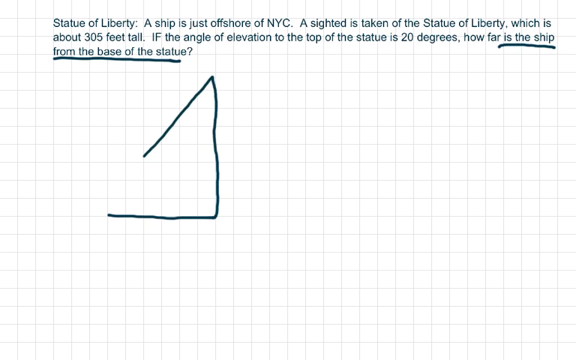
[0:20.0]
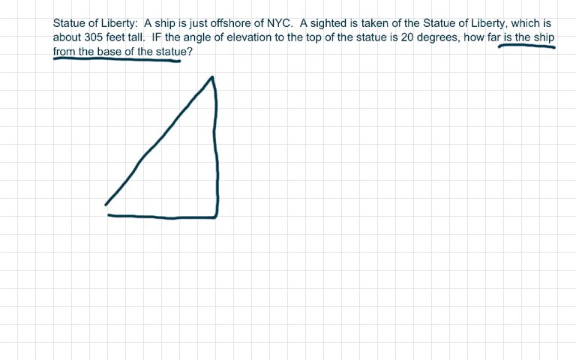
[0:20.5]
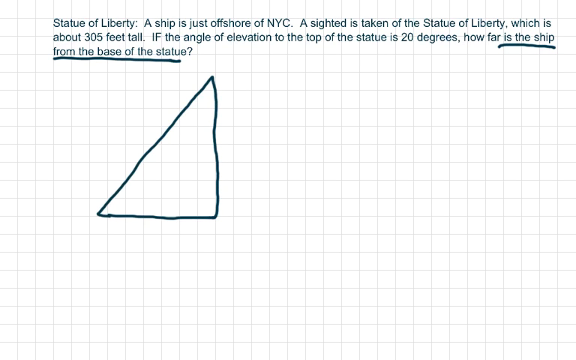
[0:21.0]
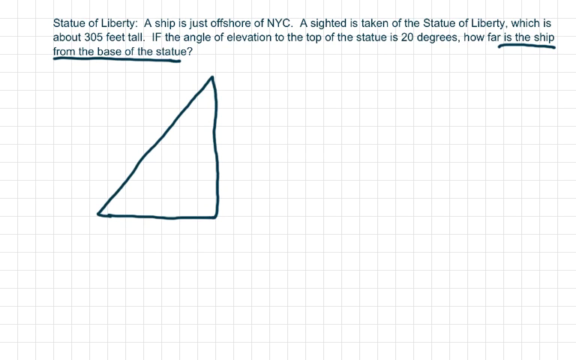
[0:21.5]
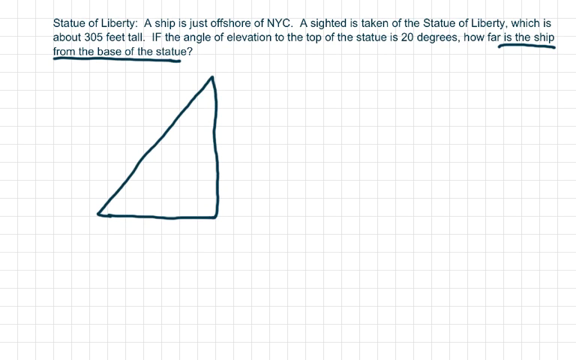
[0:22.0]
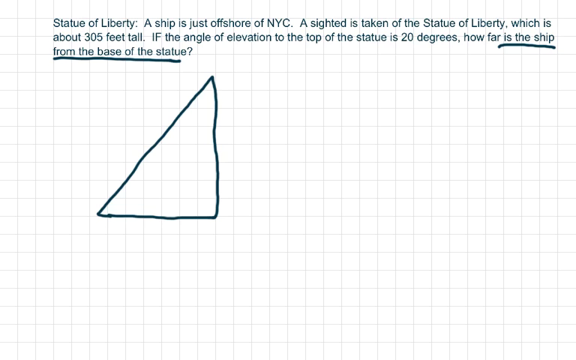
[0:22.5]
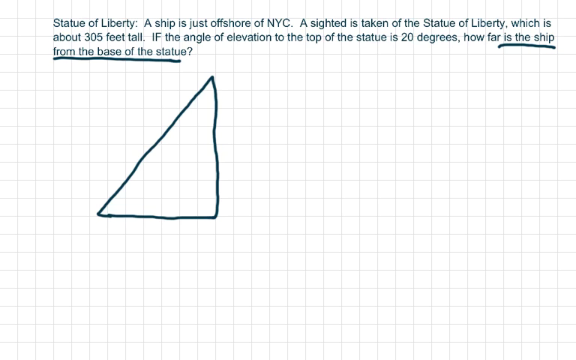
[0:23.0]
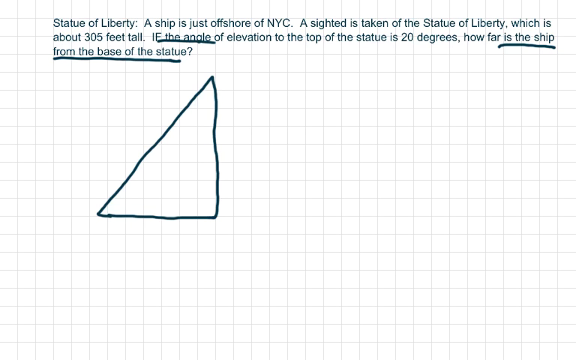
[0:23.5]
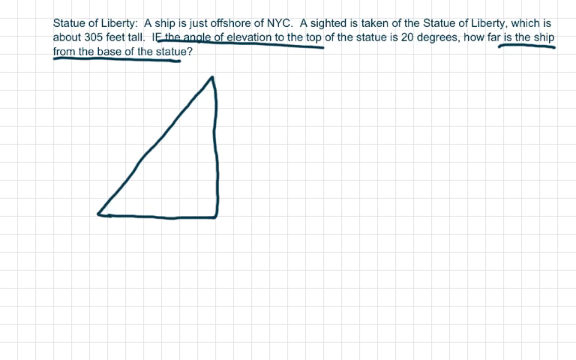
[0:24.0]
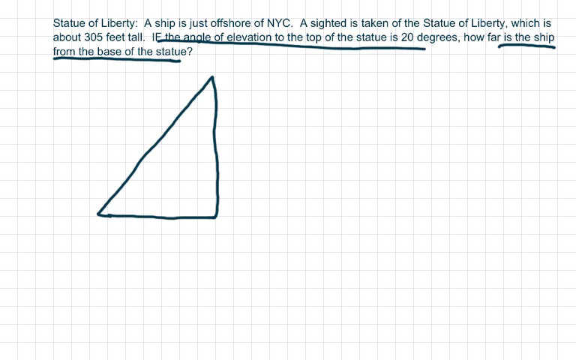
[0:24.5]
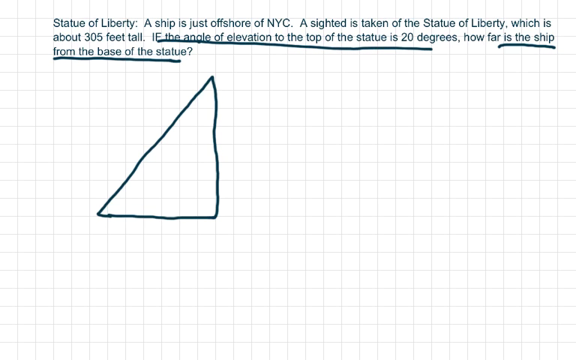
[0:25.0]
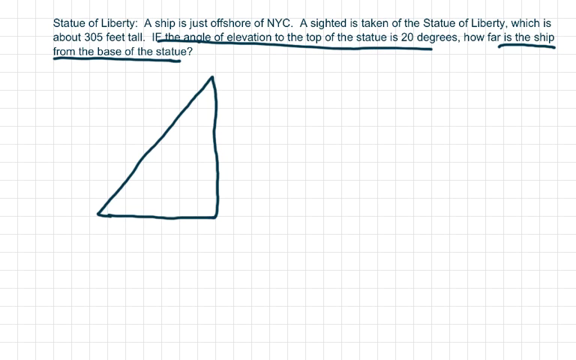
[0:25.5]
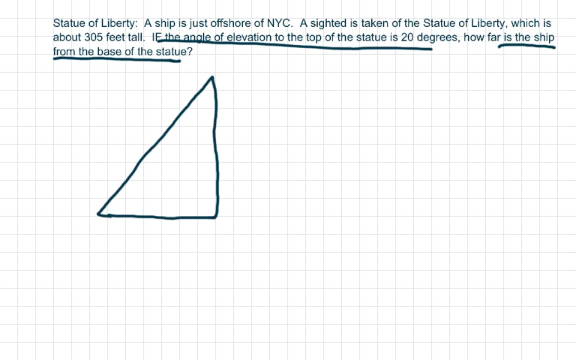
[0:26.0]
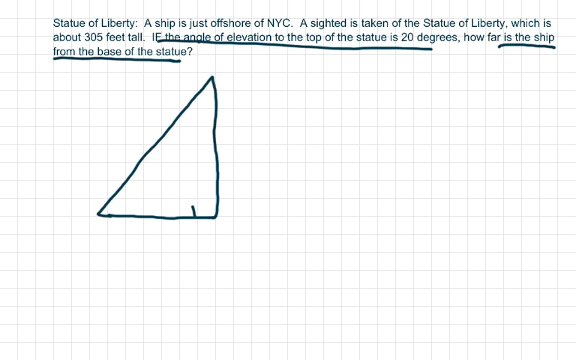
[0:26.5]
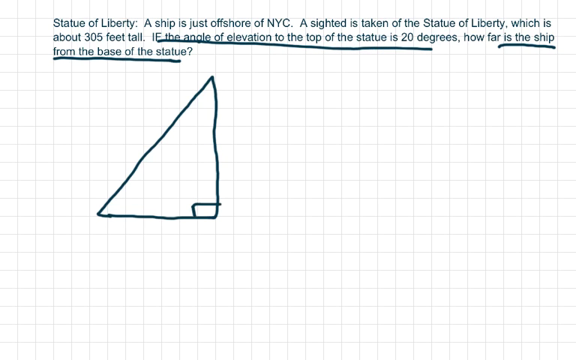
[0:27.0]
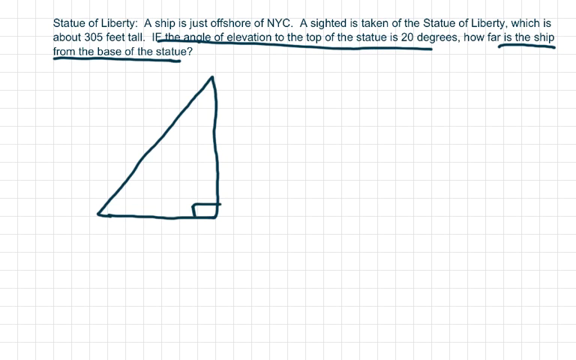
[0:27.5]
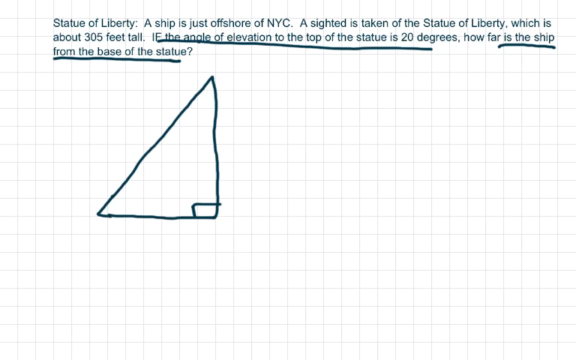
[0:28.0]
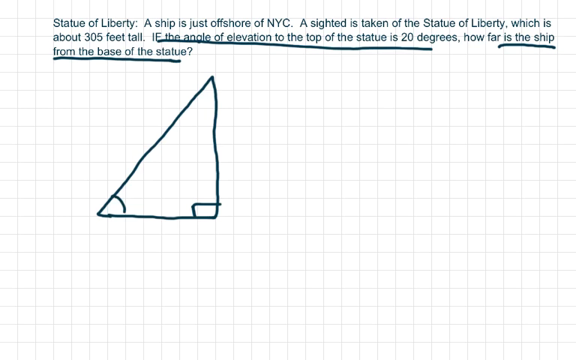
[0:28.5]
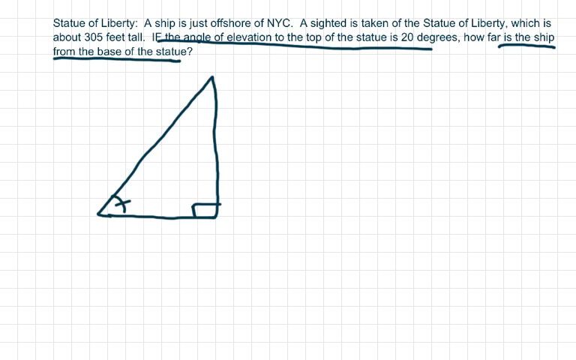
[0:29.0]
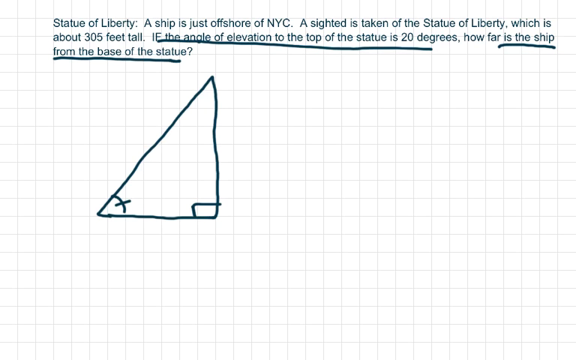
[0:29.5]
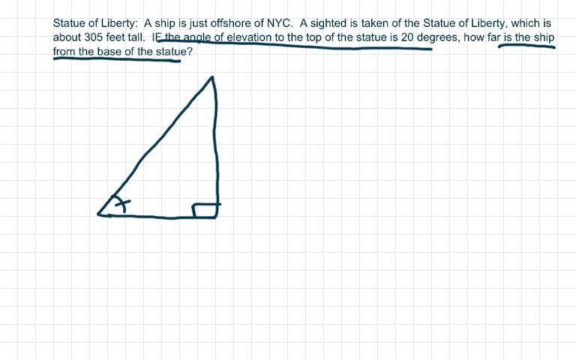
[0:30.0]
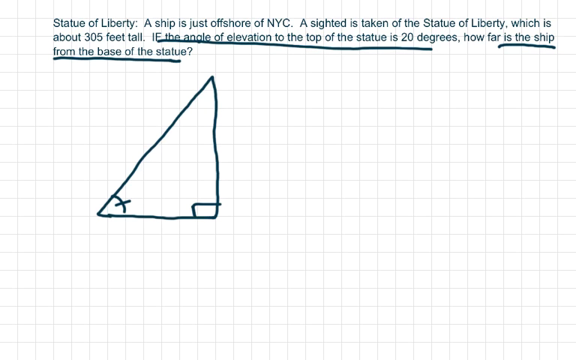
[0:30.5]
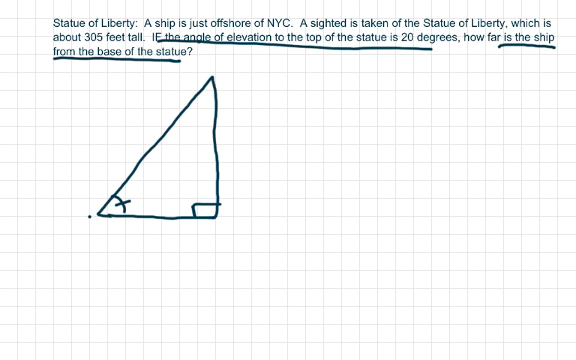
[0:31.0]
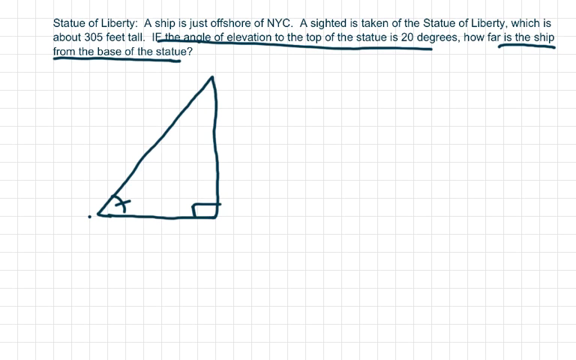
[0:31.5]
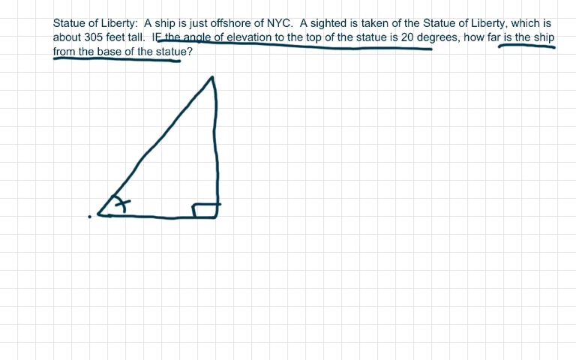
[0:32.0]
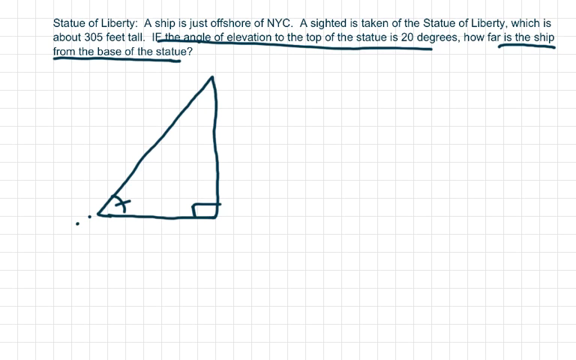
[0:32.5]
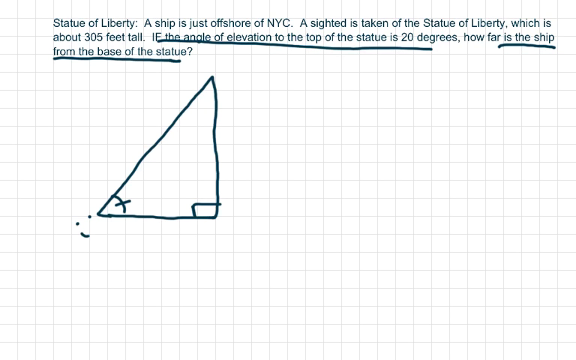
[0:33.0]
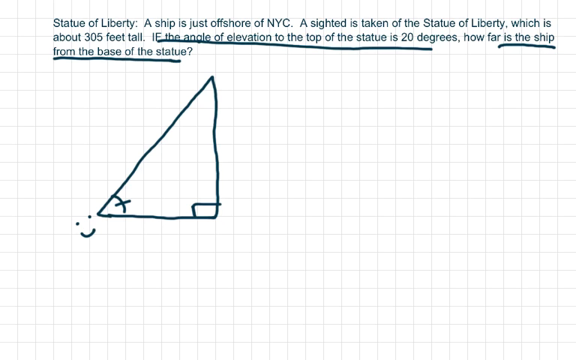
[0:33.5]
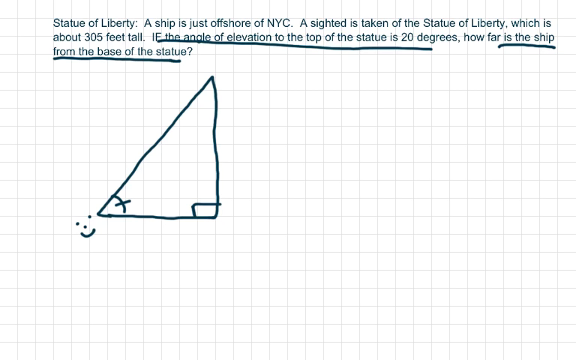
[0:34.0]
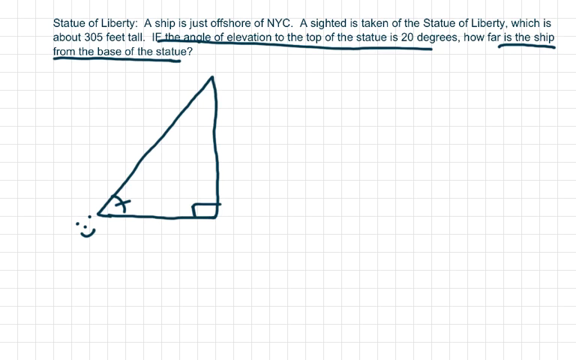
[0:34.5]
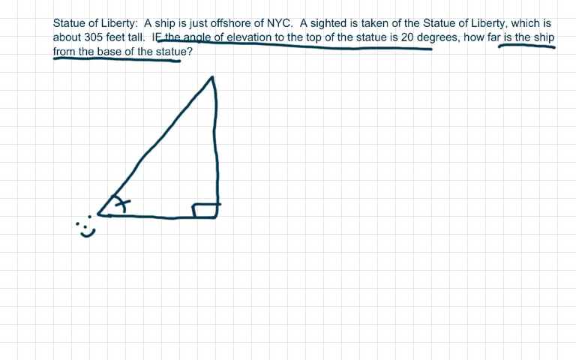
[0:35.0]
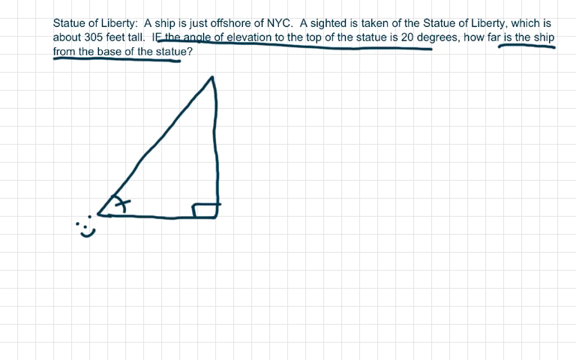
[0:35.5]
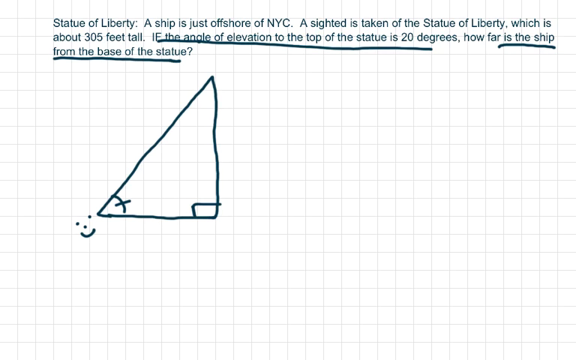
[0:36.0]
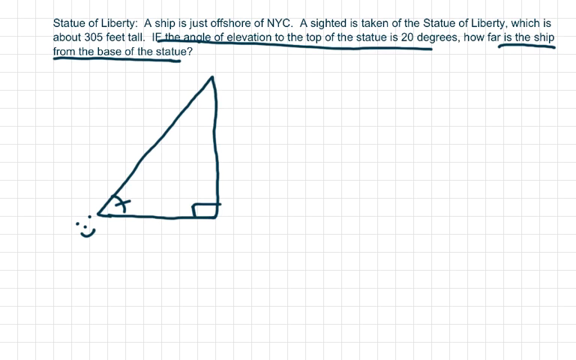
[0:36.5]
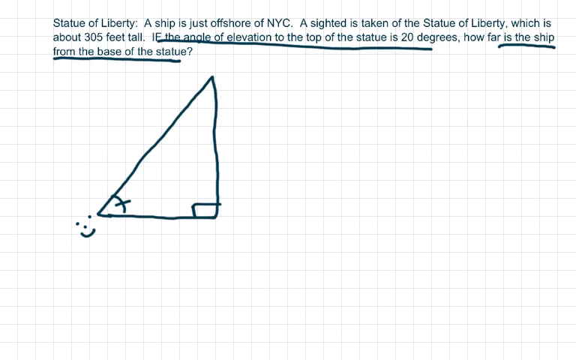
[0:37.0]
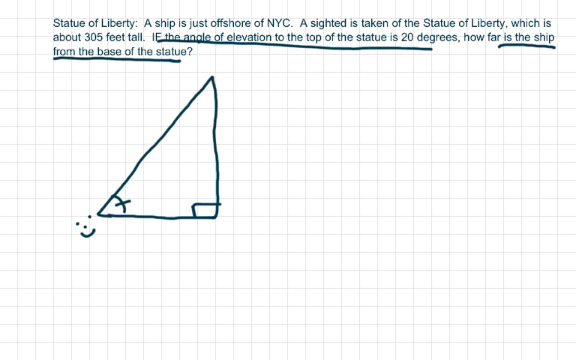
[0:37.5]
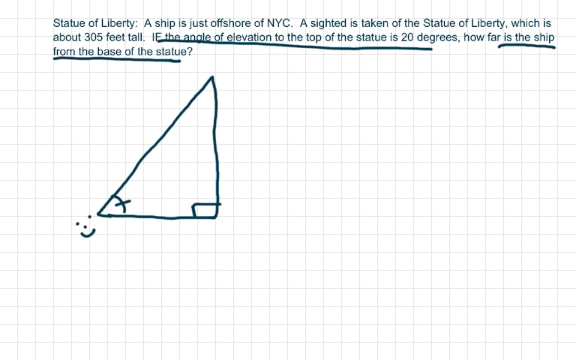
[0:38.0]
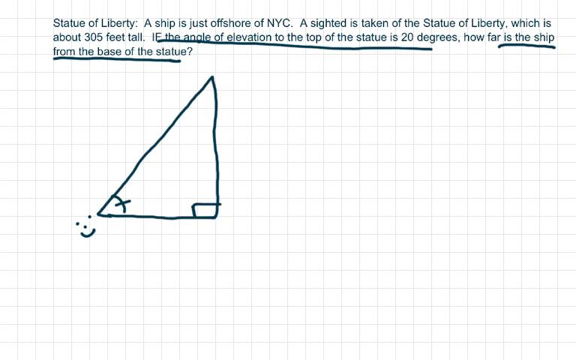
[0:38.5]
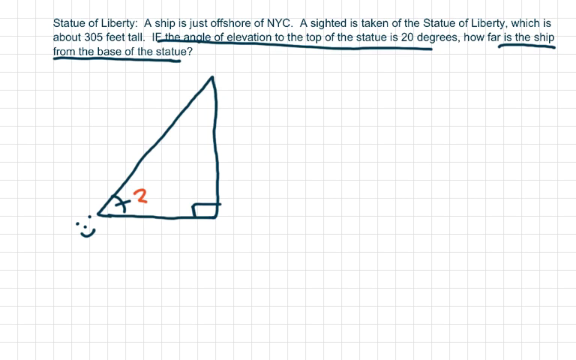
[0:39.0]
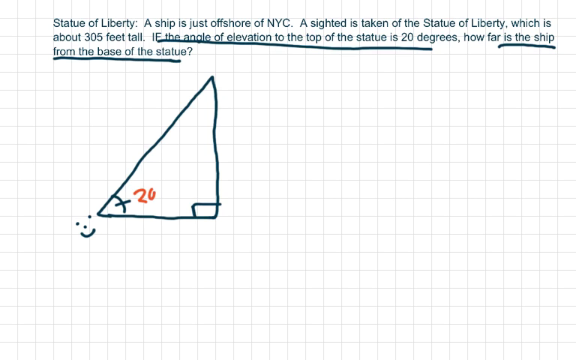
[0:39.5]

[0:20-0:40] The background looks like white graphing paper. At the top of the screen, in small dark green letters, the word problem reads "Statue of Liberty: A ship is just offshore of NYC. A sighted is taken of the Statue of Liberty, which is about 305 feet tall. If the angle of elevation to the top of the statue is 20 degrees, how far is the ship from the base of the statue?" The text "is the ship from the base of the statue" at the end of the problem is underlined with a dark green line. Underneath, in the middle of the page and slightly skewed to the left, a triangle is being drawn whose bottom right angle is a 90 degree angle and whose top and bottom left angles are acute. The text "if the angle of elevation to the top of the statue is 20 degrees" is then underlined with a thin dark green line. A small square is drawn in the bottom right angle of the triangle, indicating a 90 degree angle, and a curved line with a little dashed line in the middle is drawn in the bottom left angle. To the left of that bottom left angle, a smiley face is drawn with two dots for eyes, a dot for a nose, and a curved line for a mouth. Inside the triangle next to the bottom left angle, "20 degrees" is written in red text, apparently with a red marker.